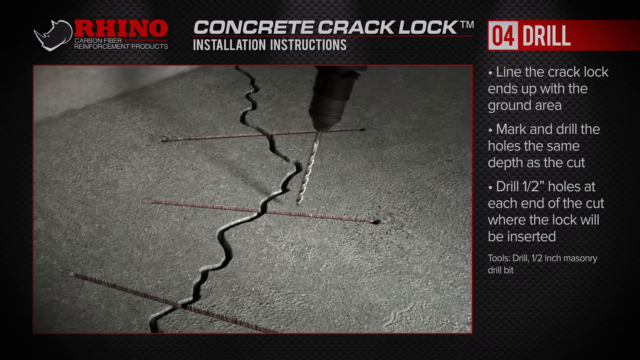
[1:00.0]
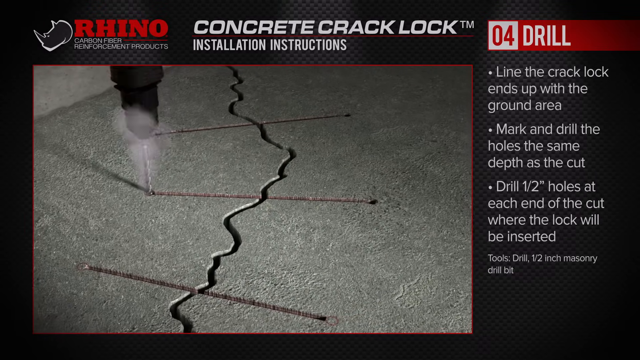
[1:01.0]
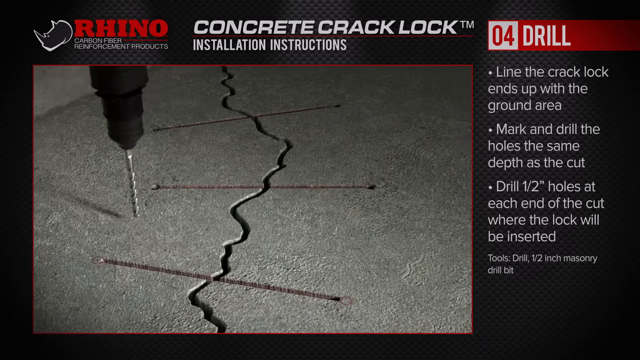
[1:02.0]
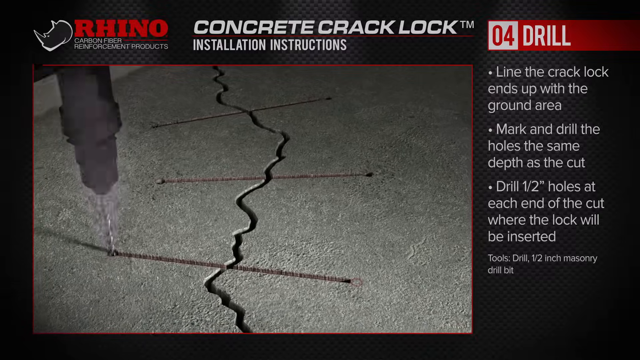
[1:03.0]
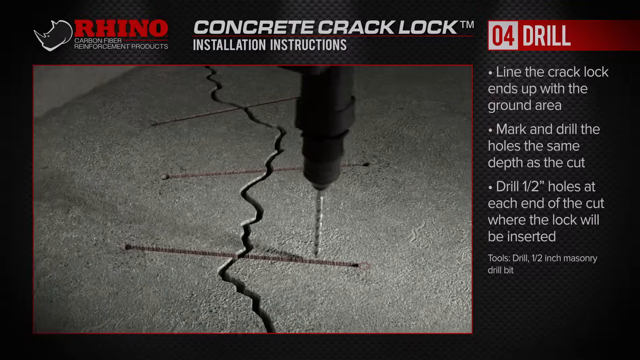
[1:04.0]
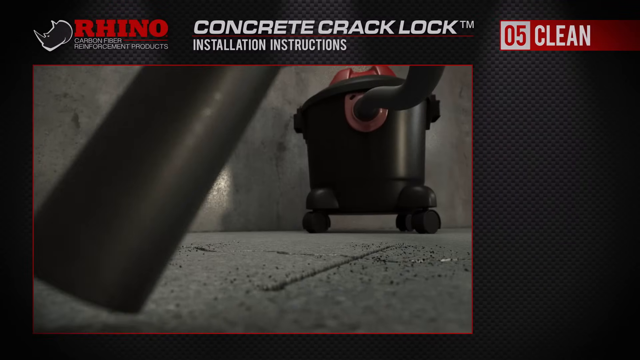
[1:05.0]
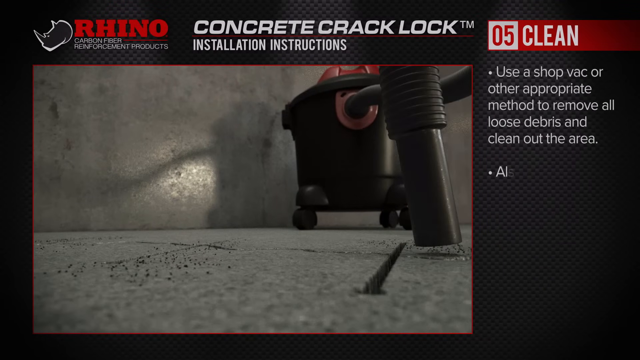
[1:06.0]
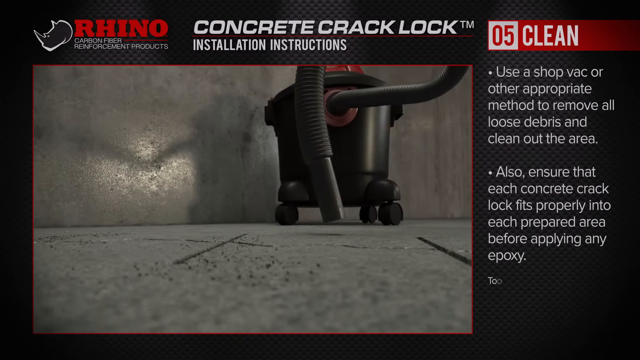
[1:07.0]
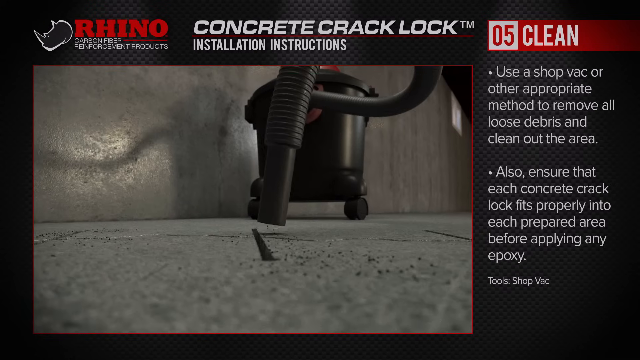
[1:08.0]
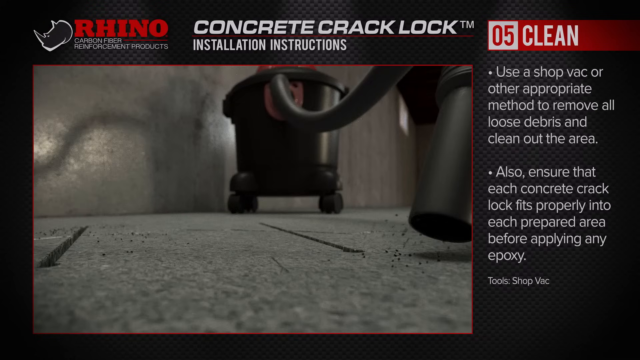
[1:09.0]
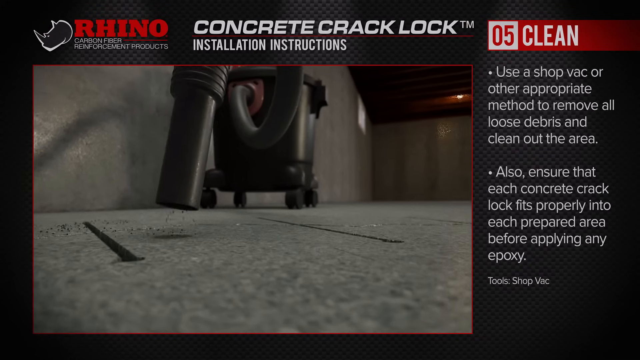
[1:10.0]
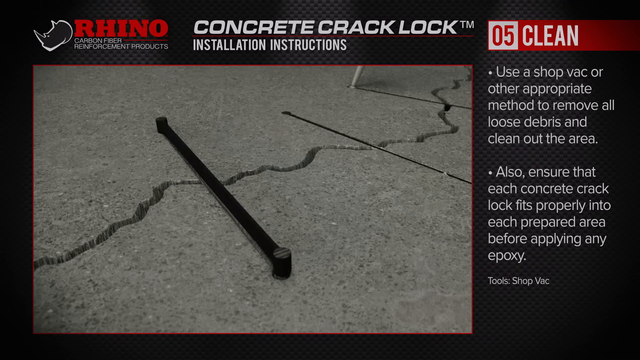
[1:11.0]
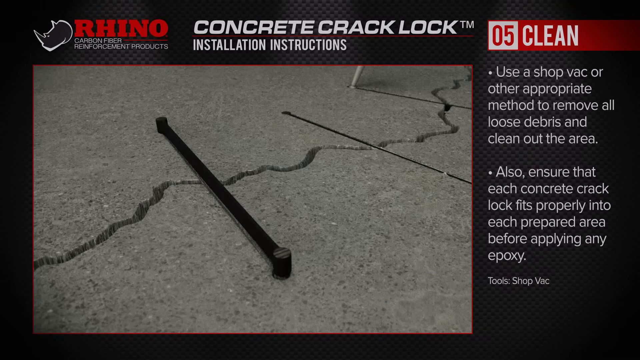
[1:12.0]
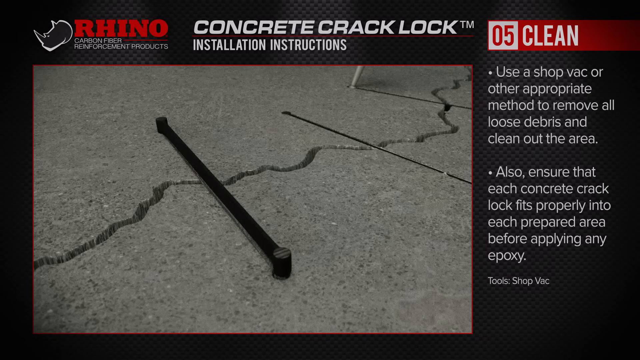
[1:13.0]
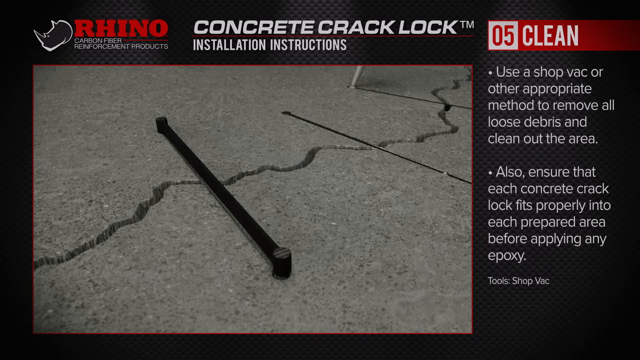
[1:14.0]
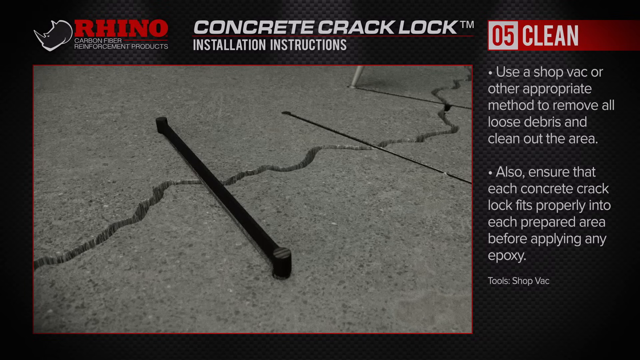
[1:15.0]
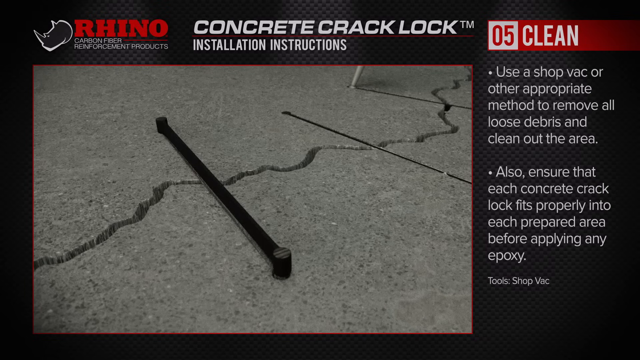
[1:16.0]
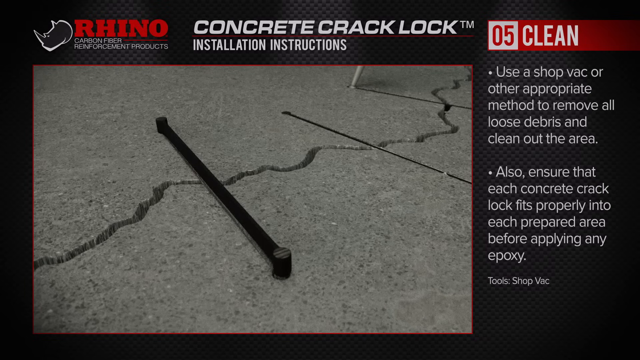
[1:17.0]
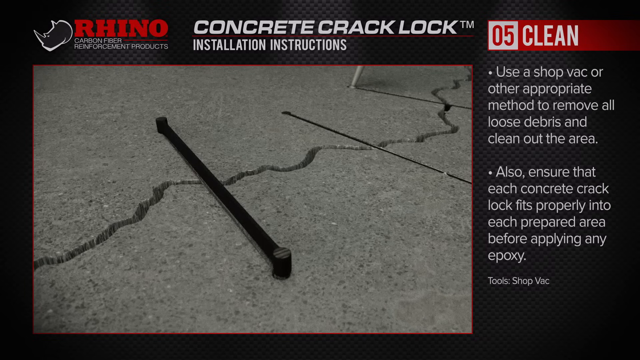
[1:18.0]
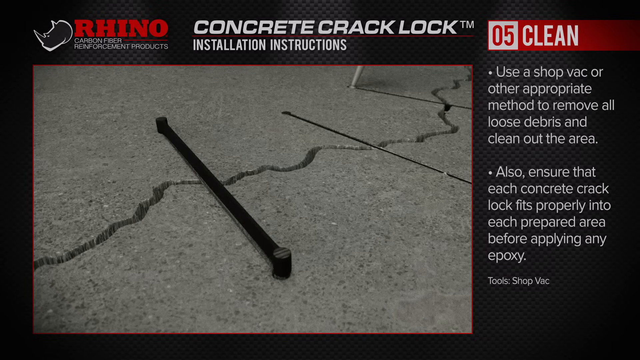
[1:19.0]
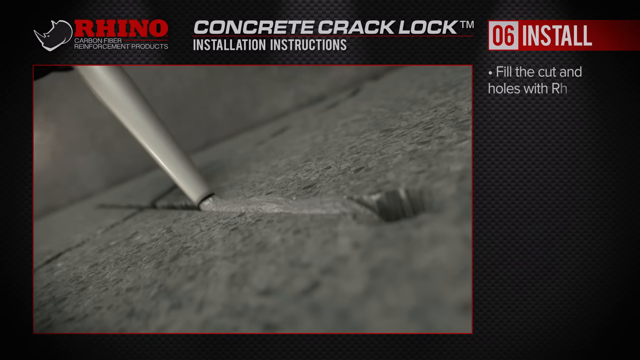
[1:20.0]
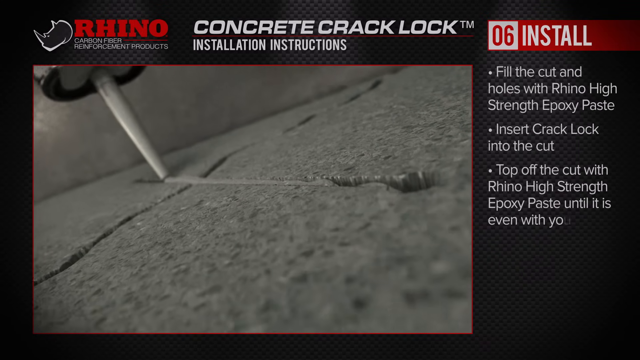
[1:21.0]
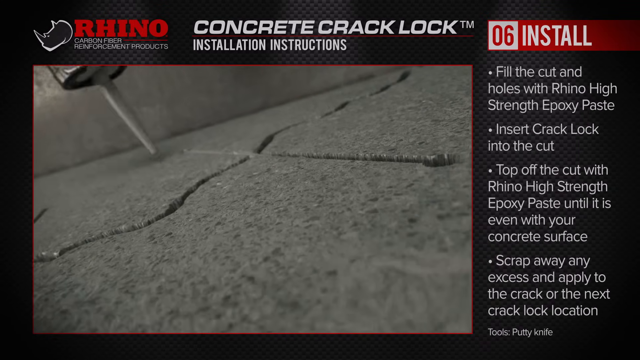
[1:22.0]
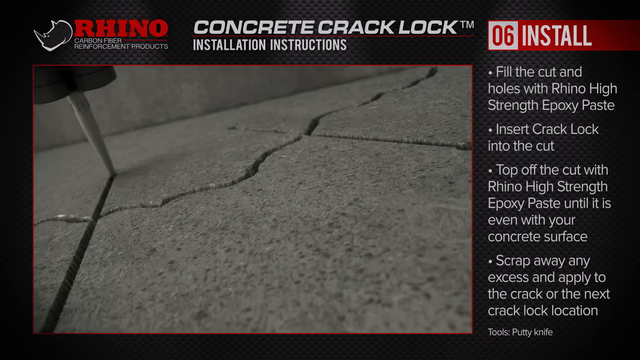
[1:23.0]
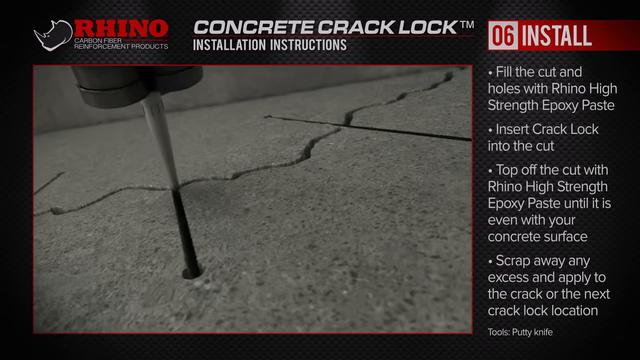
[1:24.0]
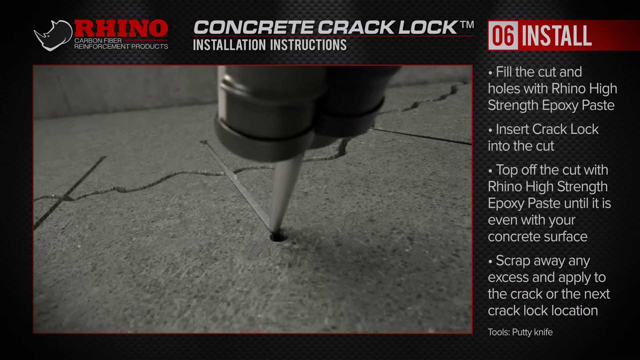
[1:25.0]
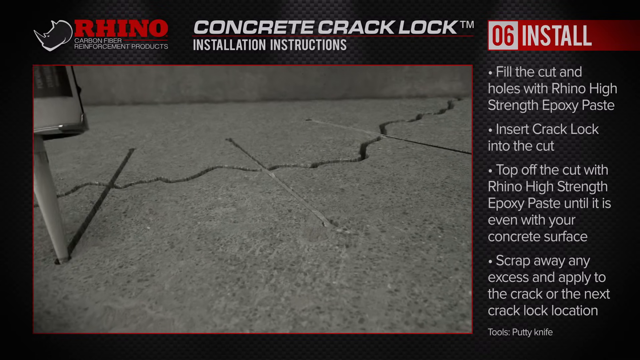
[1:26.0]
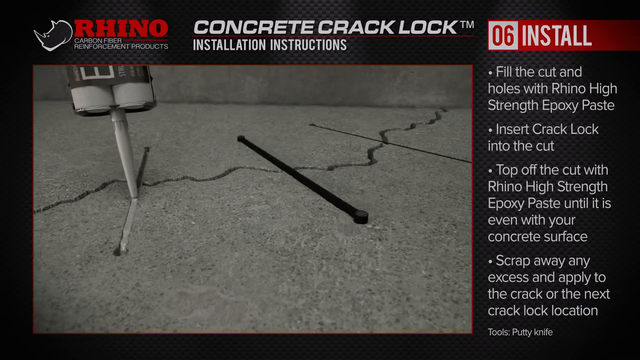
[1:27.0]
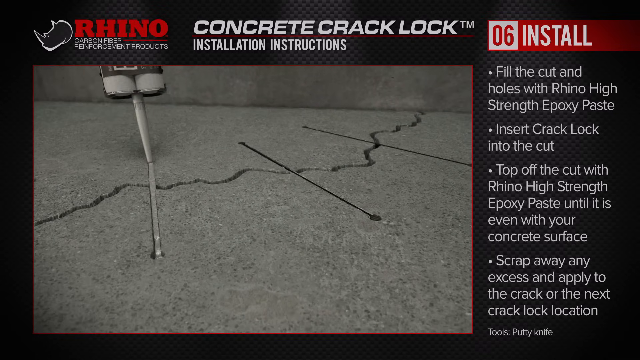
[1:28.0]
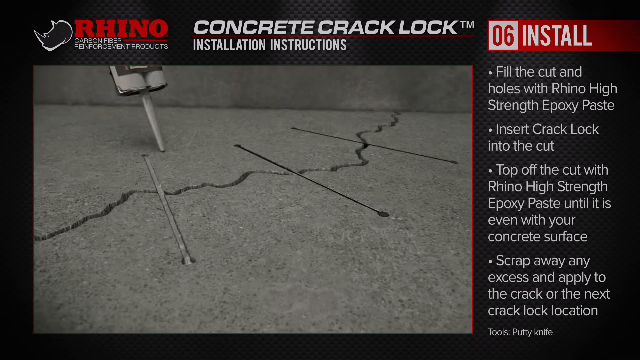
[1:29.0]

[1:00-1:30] The cleaning instruction, number five, is shown. "Clean" is written in white on a red background, while the number five is in red on a white background. A black vacuum cleaner with a black hose is shown. Instructions on the right-hand side say to use a shop vac or other appropriate methods to remove debris and clean out the area, and to ensure that each concrete crack log fits properly into each prepared area before applying any epoxy. The vacuum cleaner is used on the cracked ground floor to clean the area of debris. Step number six, install, follows, saying to fill the cuts and holes with Rhino High Strength Epoxy paste. A demonstration shows the epoxy paste filling in the lines made by the grinder; the ground with its broken lines and the grinder lines is covered by the epoxy paste. The instructions also say to insert the crack log into the cuts and top off the cuts with Rhino High Strength Epoxy paste until it is even with the concrete, and this is demonstrated as the crack log is placed inside a line made by the grind cutter.